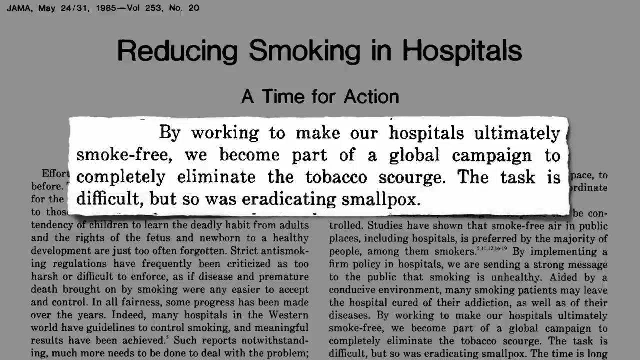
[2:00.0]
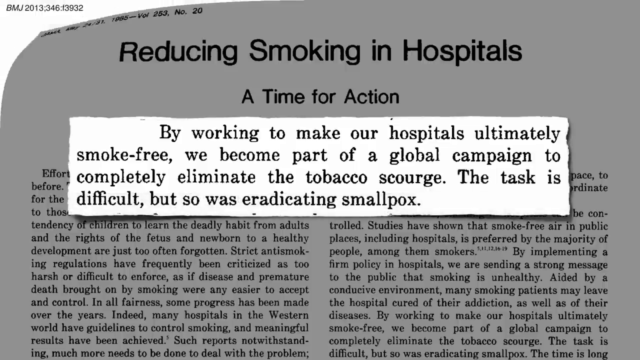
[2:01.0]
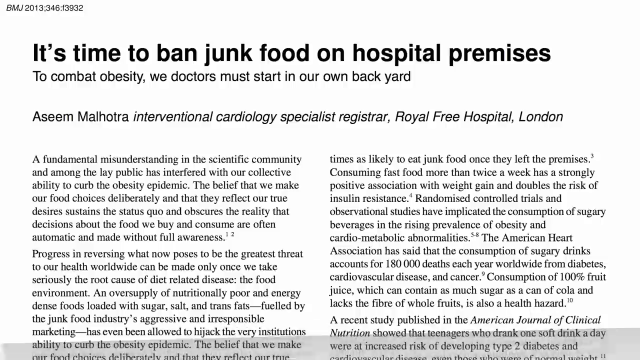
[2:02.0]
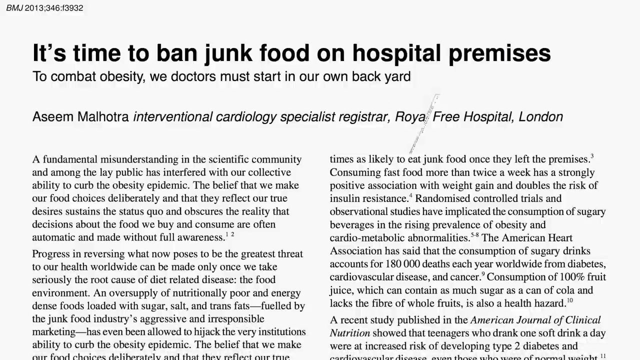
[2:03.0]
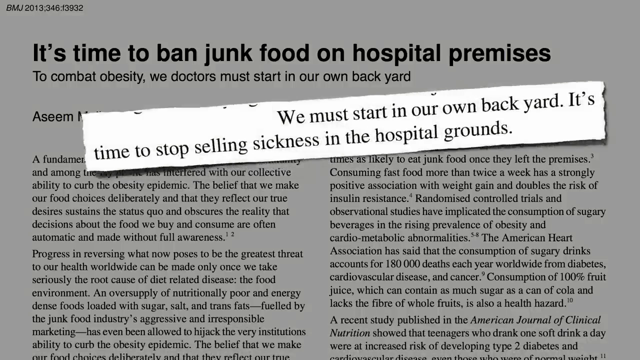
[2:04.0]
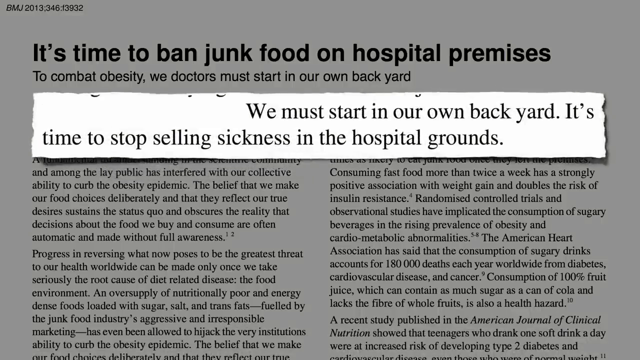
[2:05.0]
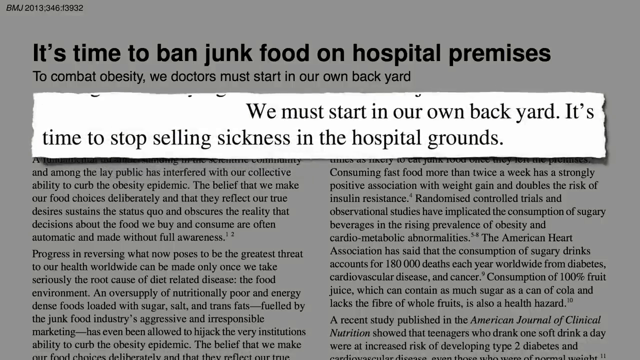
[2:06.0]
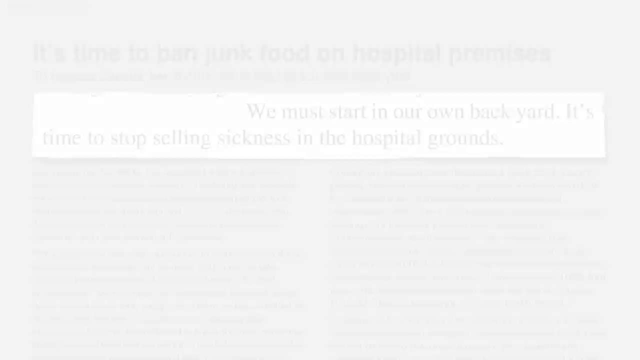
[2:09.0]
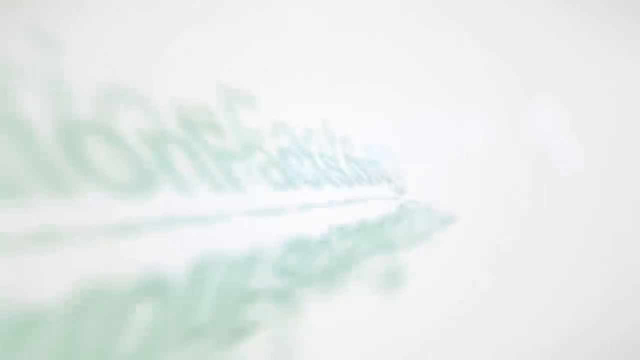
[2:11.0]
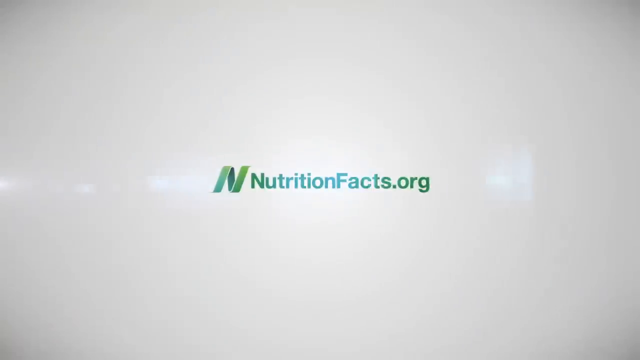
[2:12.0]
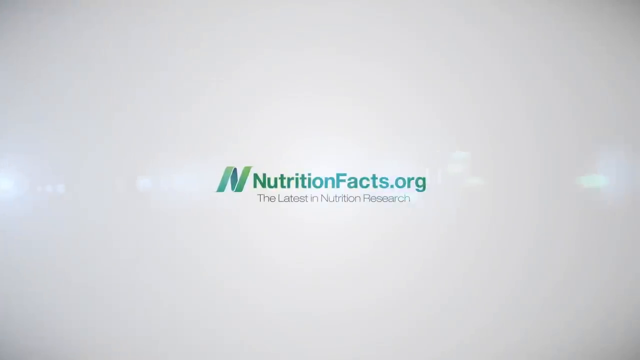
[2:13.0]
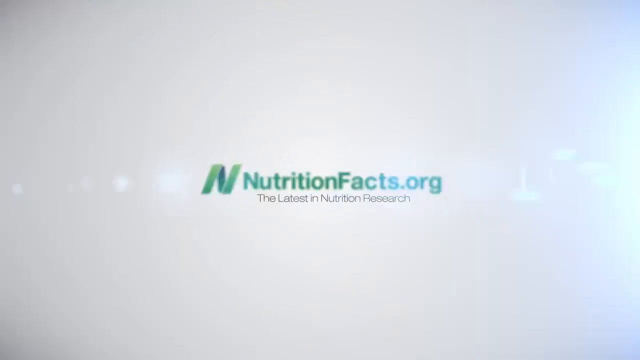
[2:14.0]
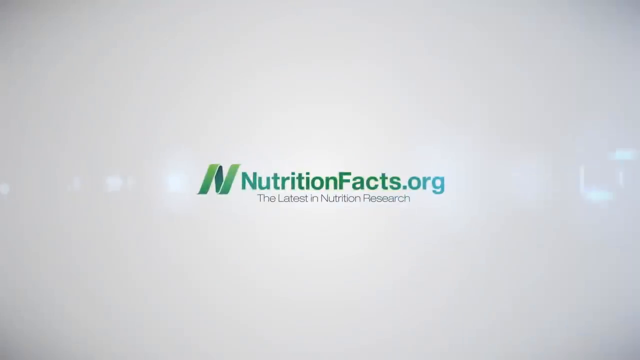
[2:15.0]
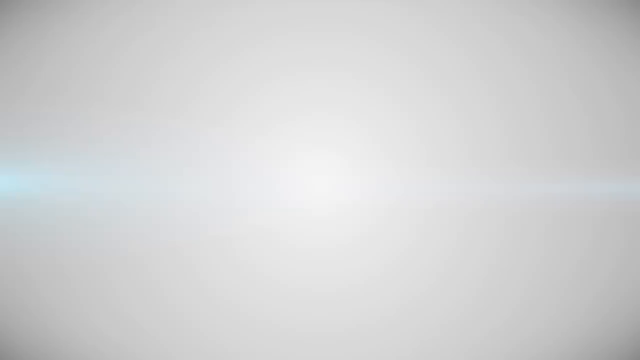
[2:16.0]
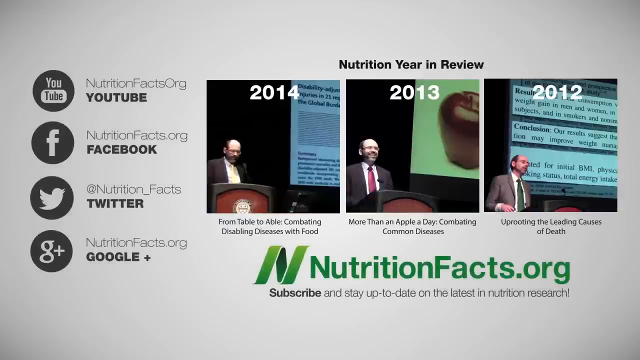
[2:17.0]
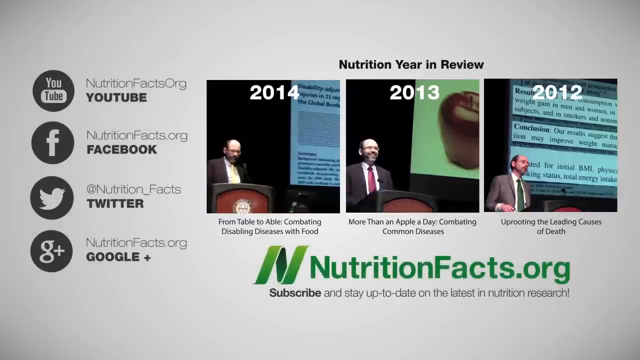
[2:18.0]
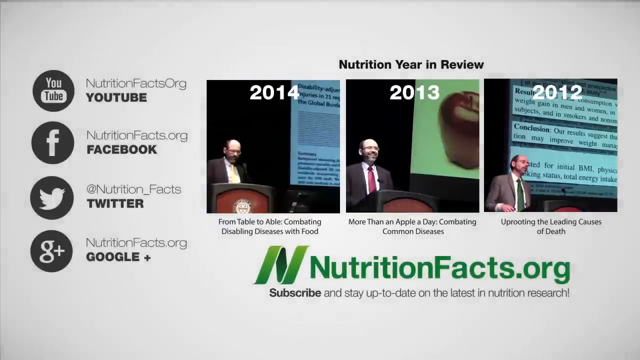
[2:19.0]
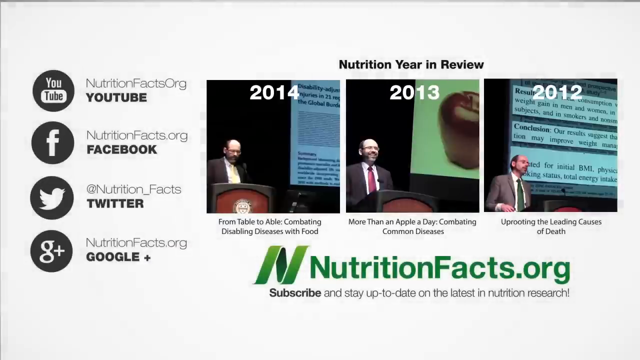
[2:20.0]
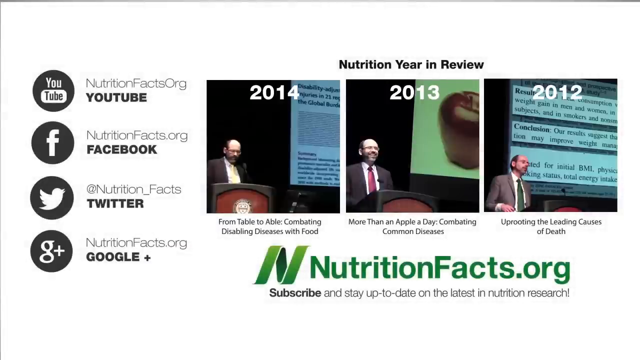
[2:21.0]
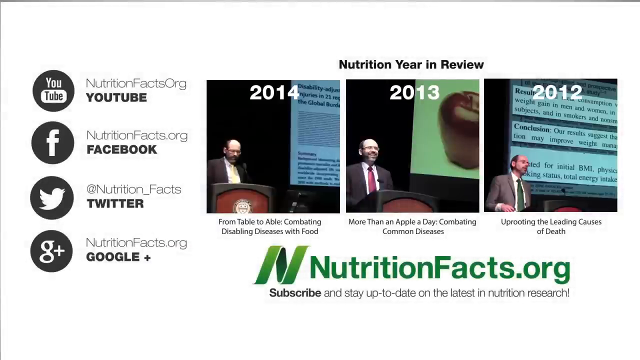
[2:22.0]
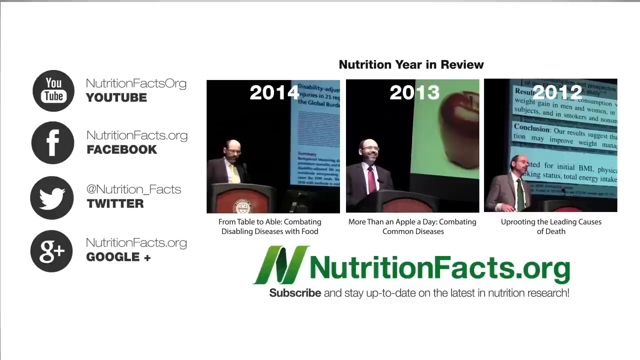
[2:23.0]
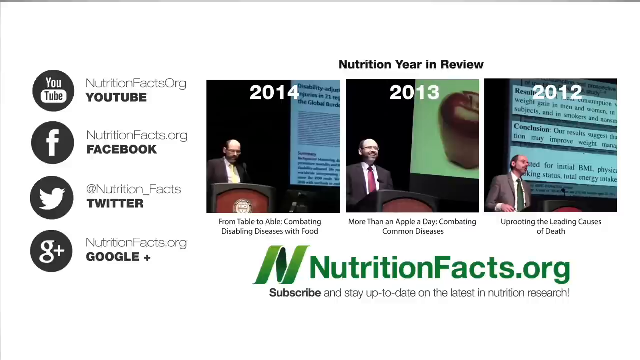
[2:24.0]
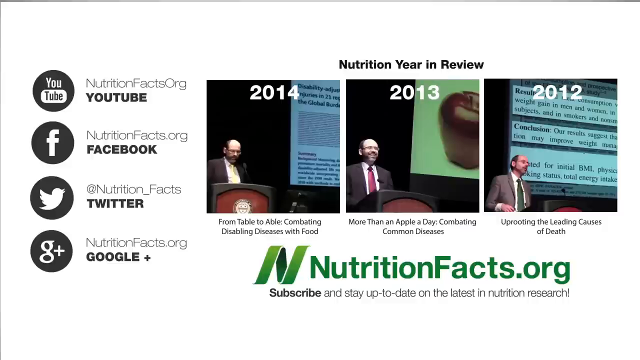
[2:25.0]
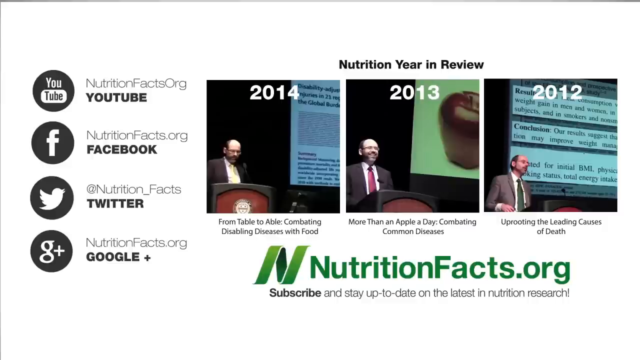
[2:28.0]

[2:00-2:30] The previous article folds from left to right and falls toward the viewer, and the new one reads "it's time to ban junk food on hospital premises." A highlighted excerpt comes to the middle: "we must start in our own backyard. It's time to stop selling sickness in the Hospital Grounds." It fades out, and the logo from the beginning of the video flies in: a green and blue capital N, almost ribbon-like, with "nutritionfacts.org" in green and, below it, "the latest in nutrition research," on a white background. The words then fly toward the screen. Finally, a screen shows three images that appear to be speakers talking behind a podium at a conference, with the text "nutrition year in review."